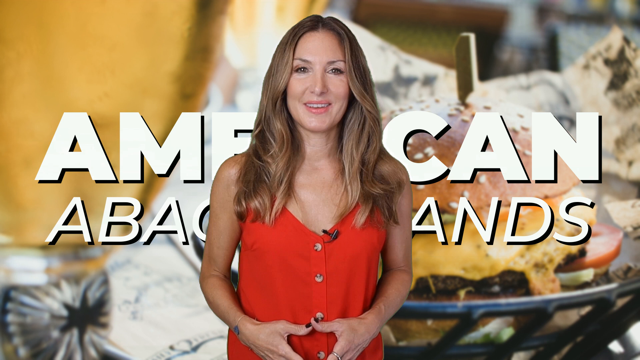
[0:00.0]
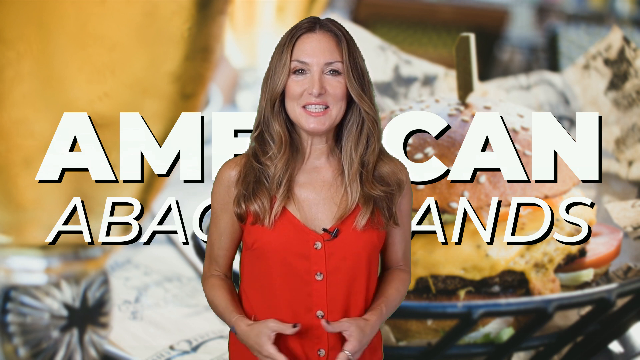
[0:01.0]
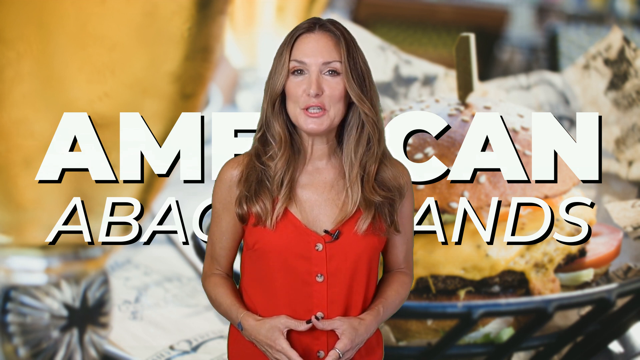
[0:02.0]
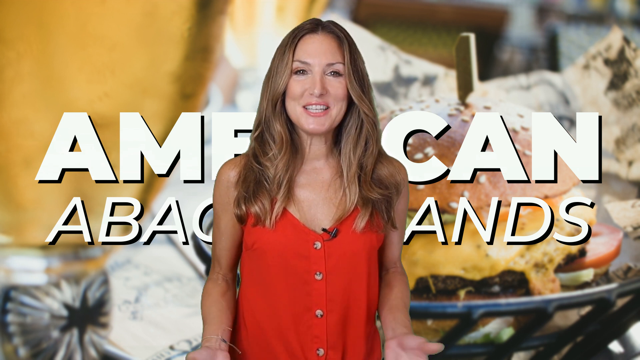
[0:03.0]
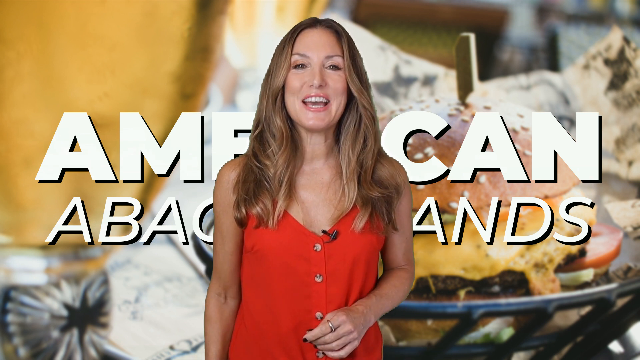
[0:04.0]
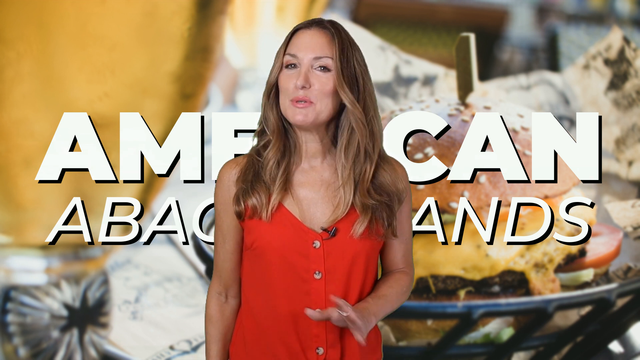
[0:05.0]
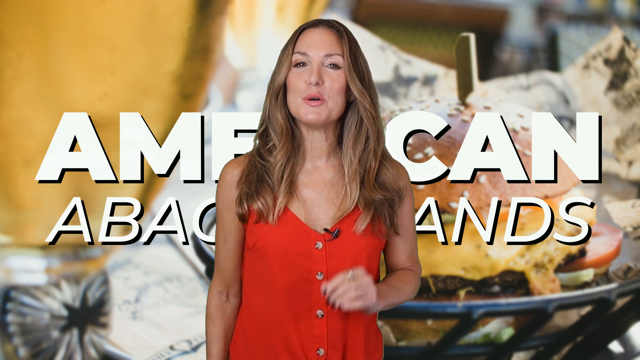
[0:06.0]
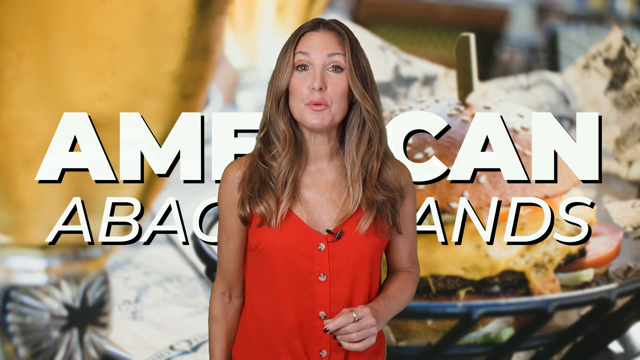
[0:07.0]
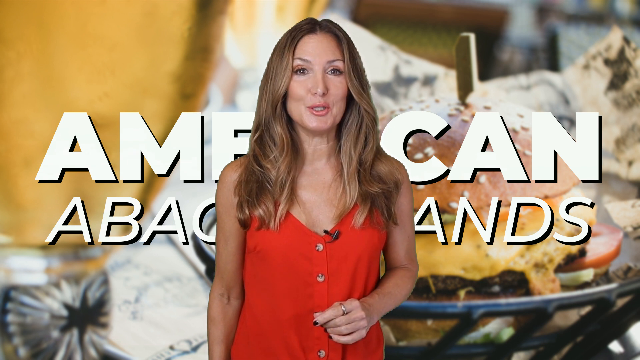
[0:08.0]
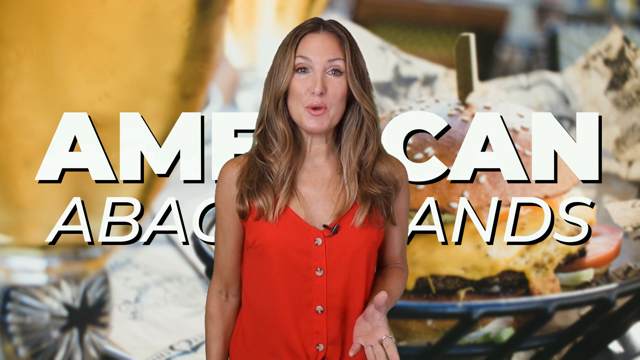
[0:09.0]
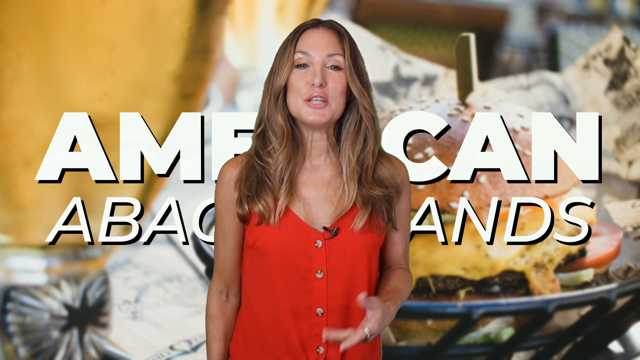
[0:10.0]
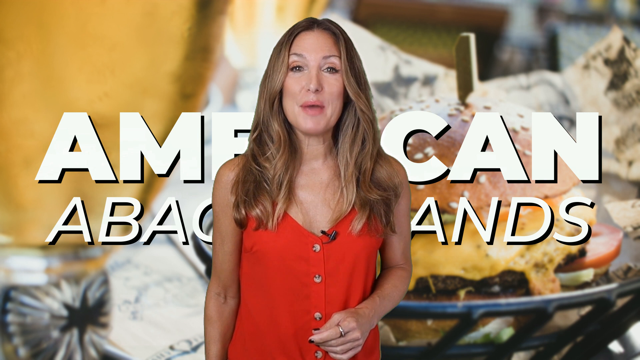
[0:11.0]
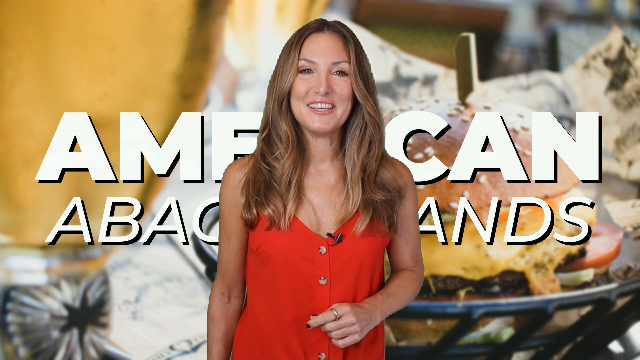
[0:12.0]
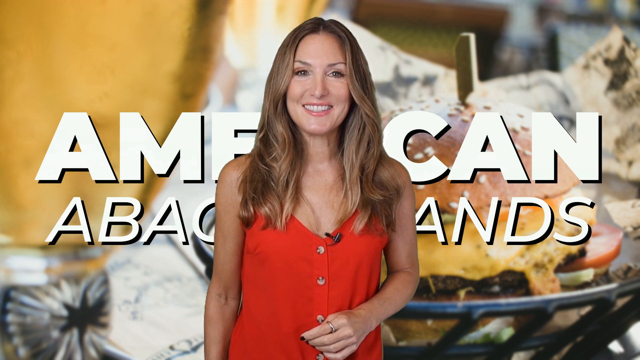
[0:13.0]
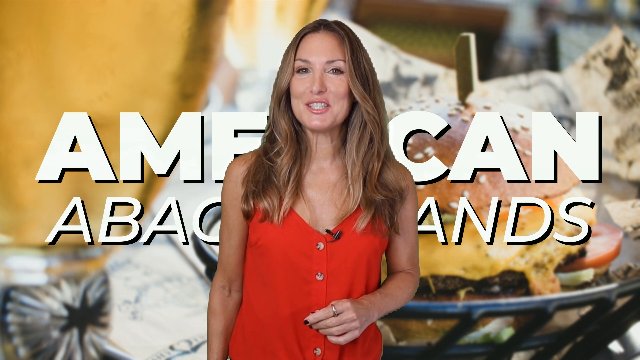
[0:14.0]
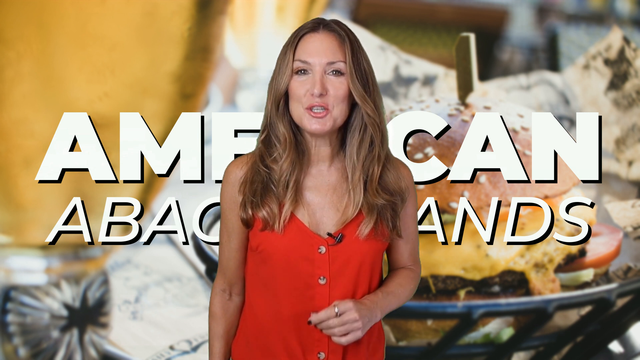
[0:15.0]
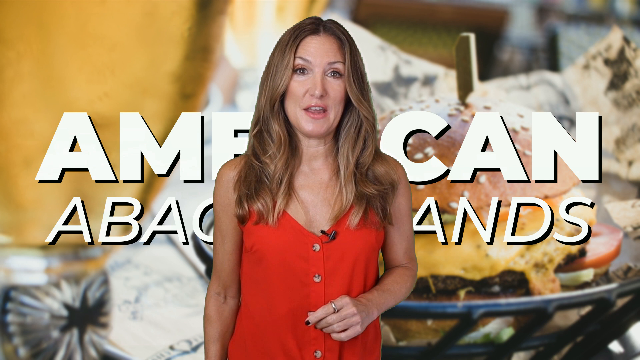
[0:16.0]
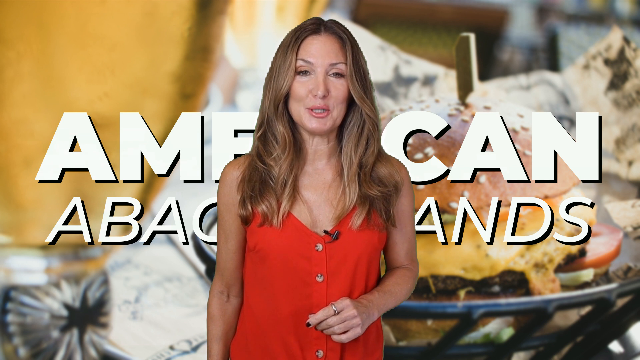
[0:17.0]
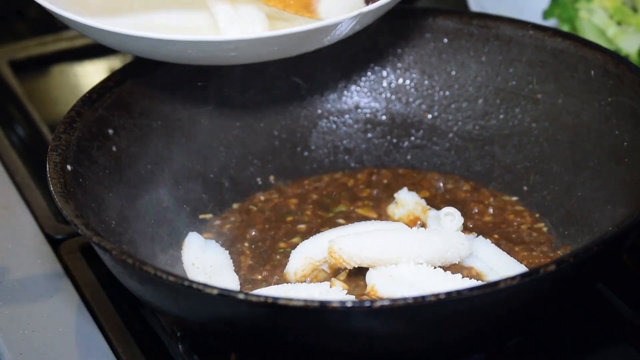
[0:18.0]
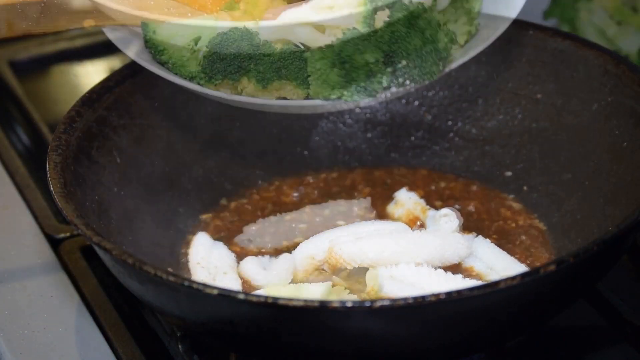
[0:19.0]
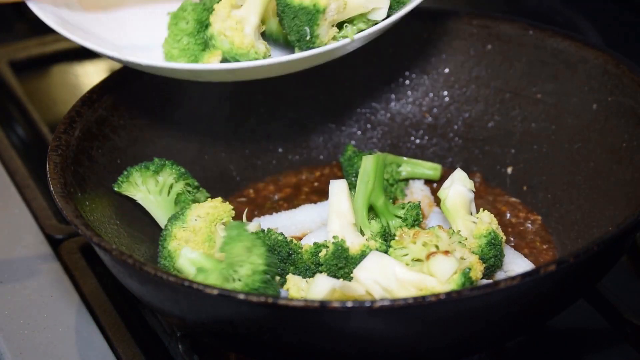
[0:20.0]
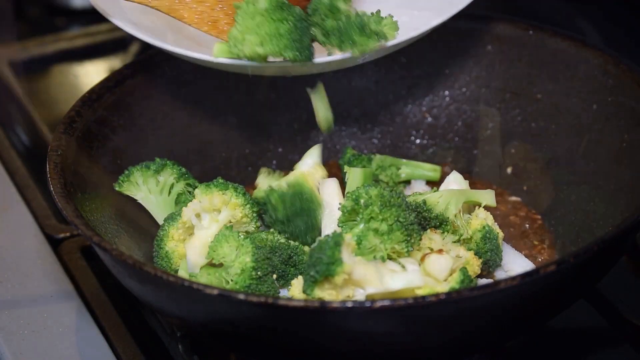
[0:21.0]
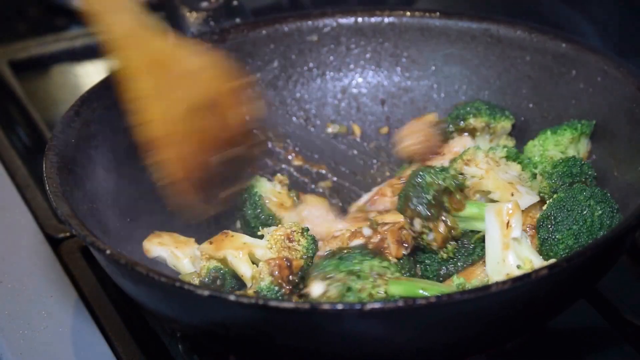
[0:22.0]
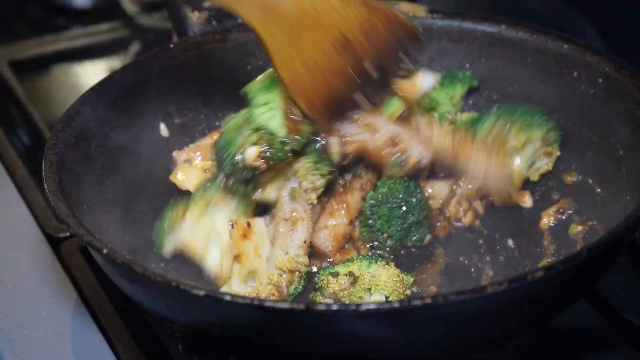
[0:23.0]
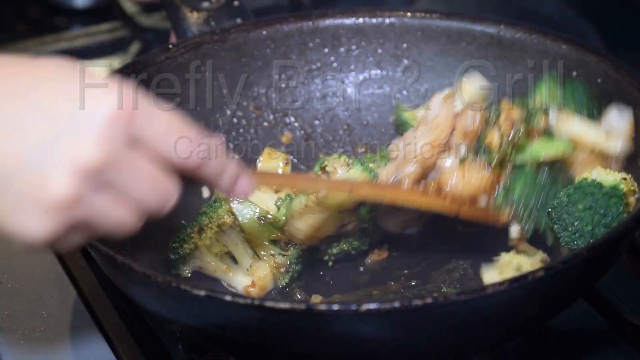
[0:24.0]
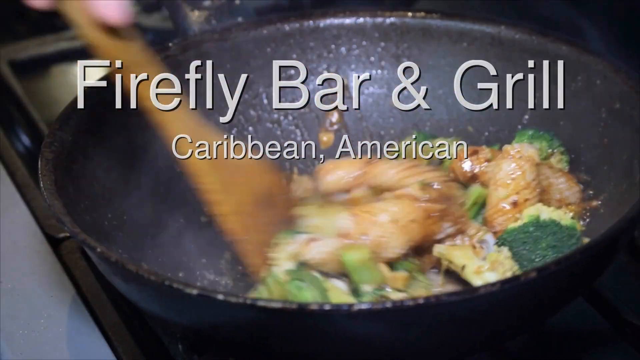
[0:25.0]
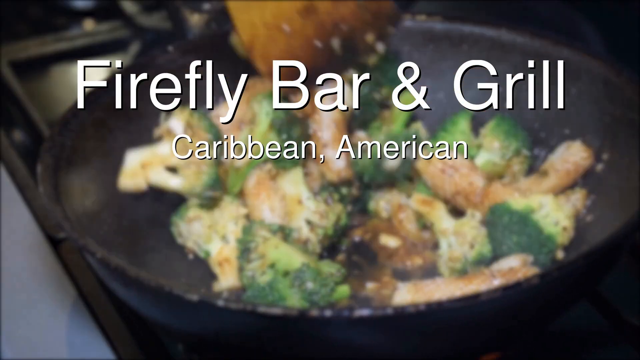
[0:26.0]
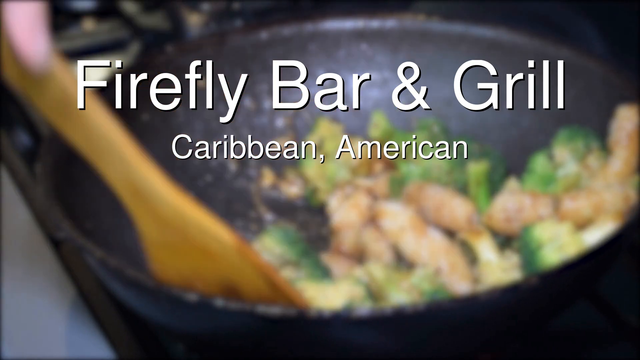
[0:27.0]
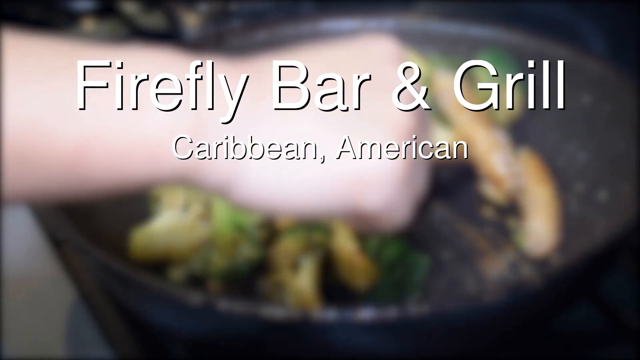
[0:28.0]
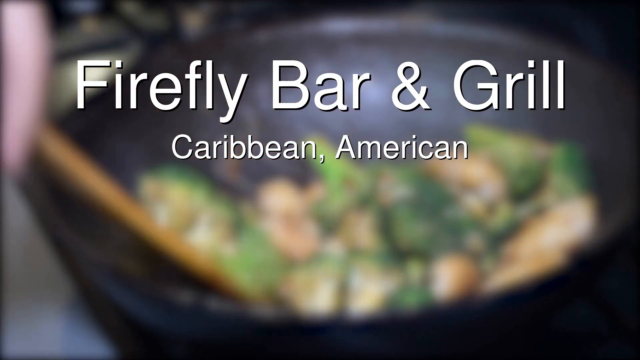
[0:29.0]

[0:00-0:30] A woman with straight, long, blonde hair smiles and talks to the camera. She wears a red sleeveless shirt with buttons in the front and is filmed from the waist up; she appears to be fit. Behind her is white text on top of an image of a cheeseburger; the first word is "American," and the following words are not really visible because she is standing in front of them. The scene then shifts to a close-up shot of a cooking demonstration: in what appears to be a deep black metal pan or wok, white vegetables simmer and cook in a dark brown, oily-looking sauce. As they cook, broccoli is added to the pan and stir-fried with a wooden spatula.